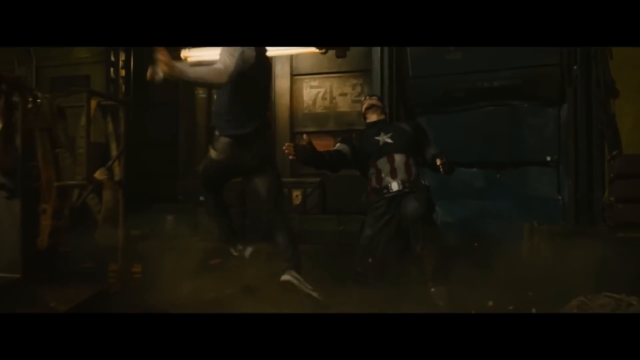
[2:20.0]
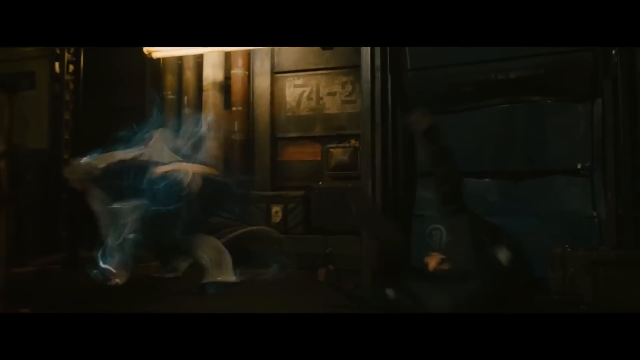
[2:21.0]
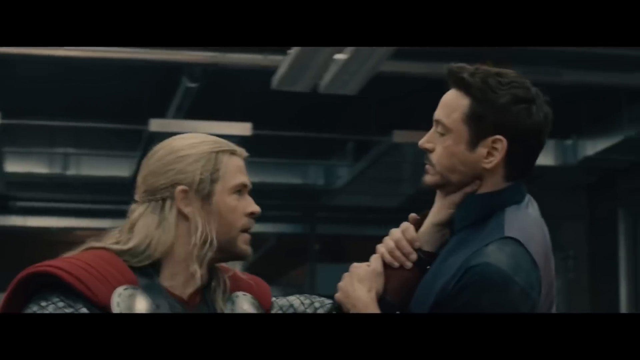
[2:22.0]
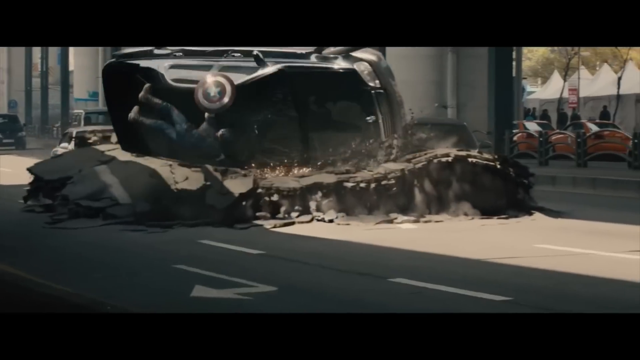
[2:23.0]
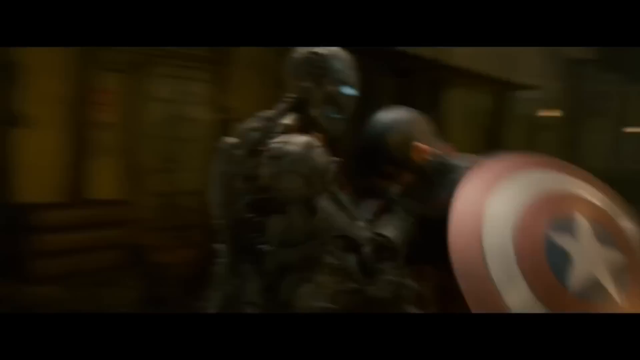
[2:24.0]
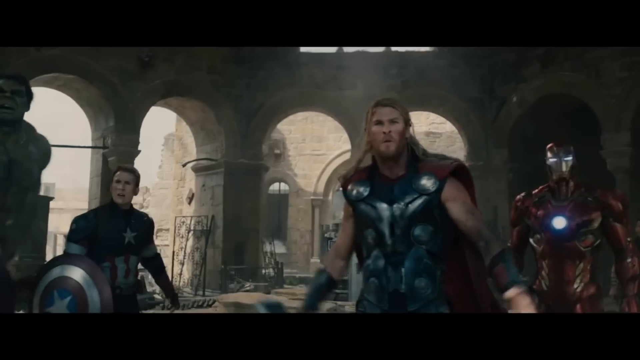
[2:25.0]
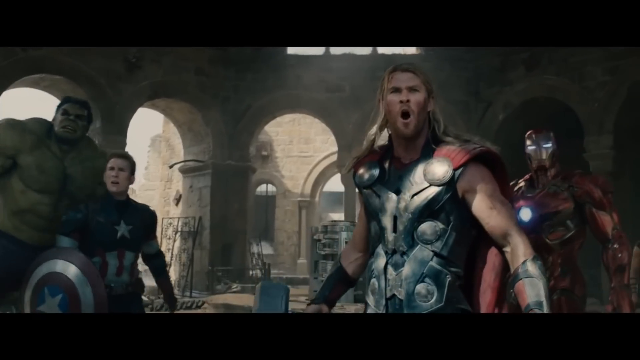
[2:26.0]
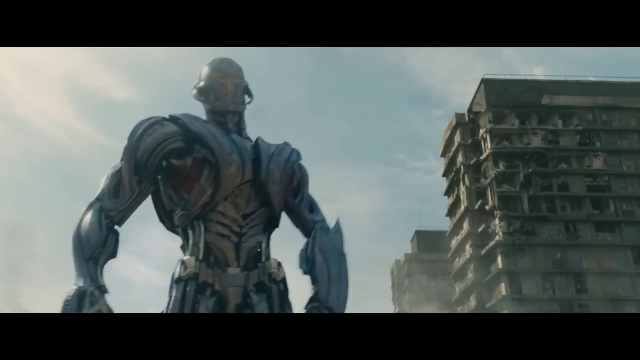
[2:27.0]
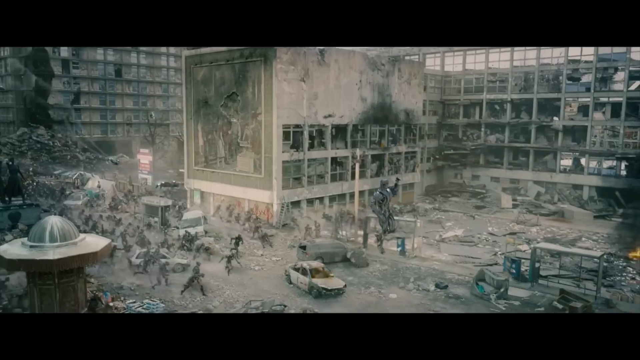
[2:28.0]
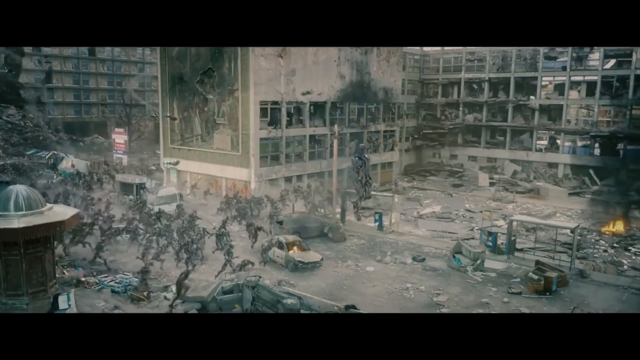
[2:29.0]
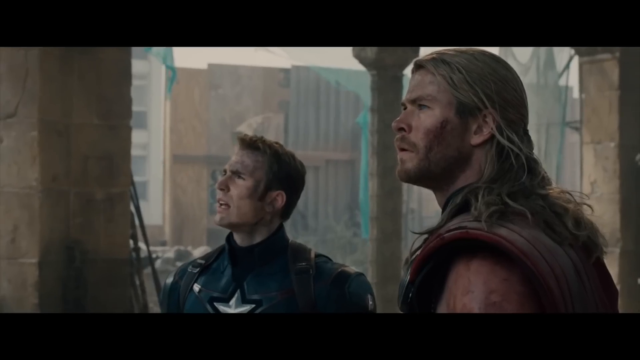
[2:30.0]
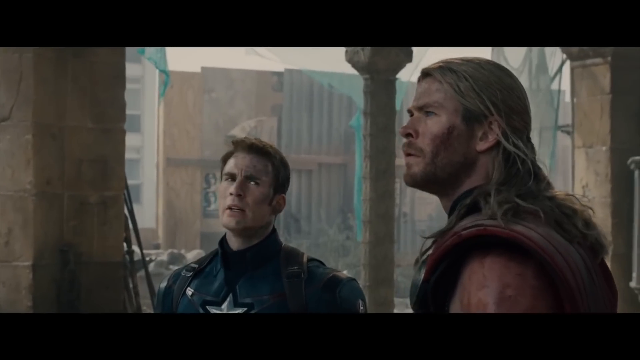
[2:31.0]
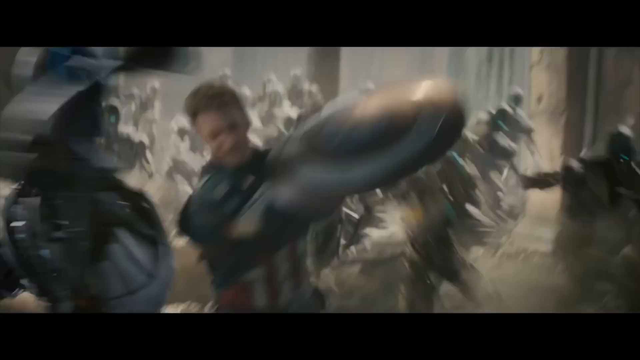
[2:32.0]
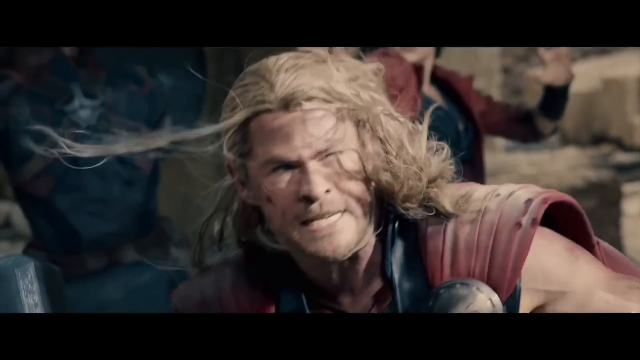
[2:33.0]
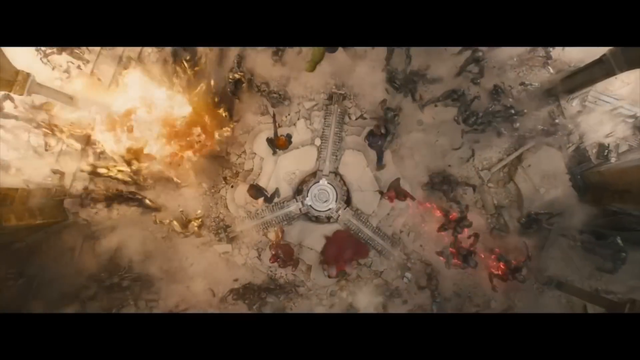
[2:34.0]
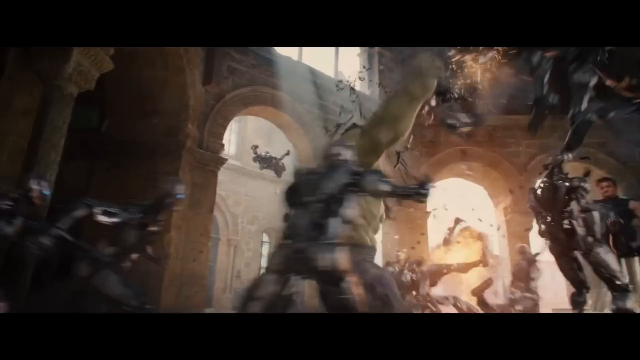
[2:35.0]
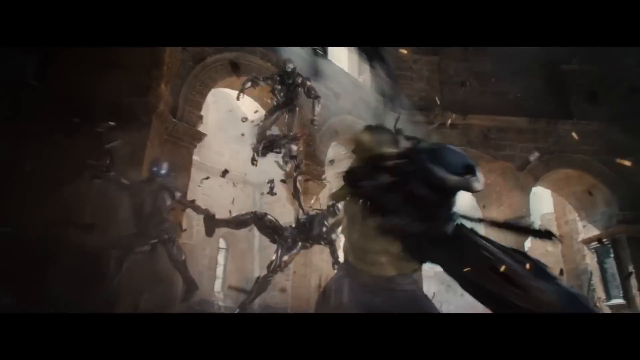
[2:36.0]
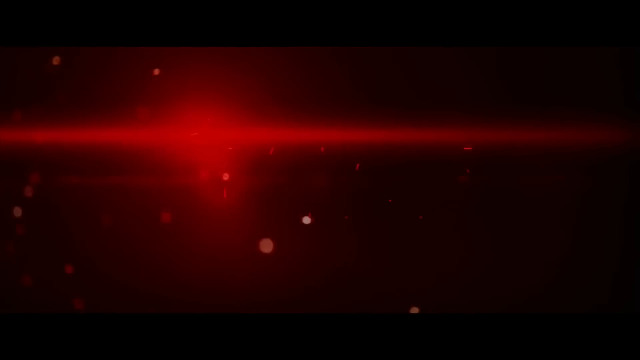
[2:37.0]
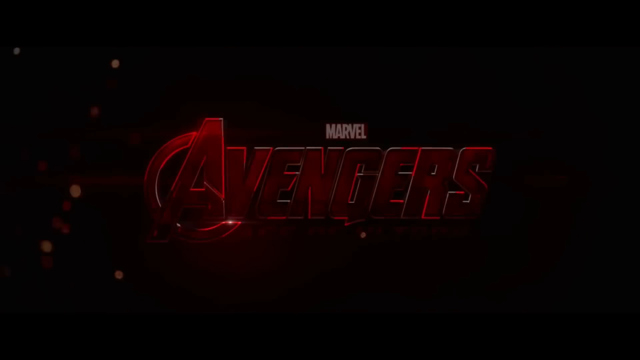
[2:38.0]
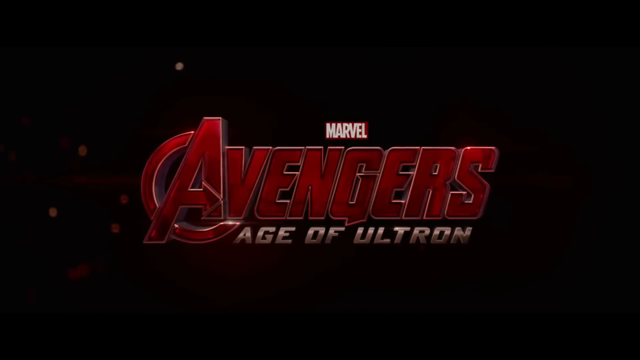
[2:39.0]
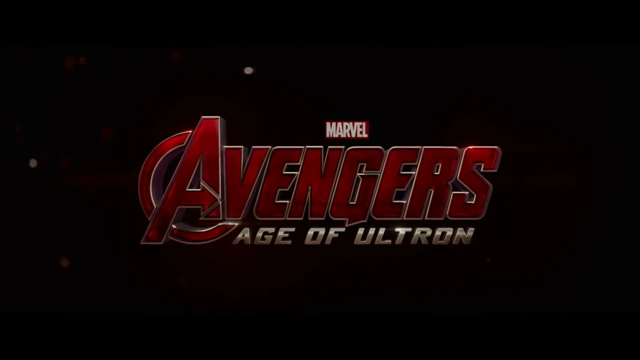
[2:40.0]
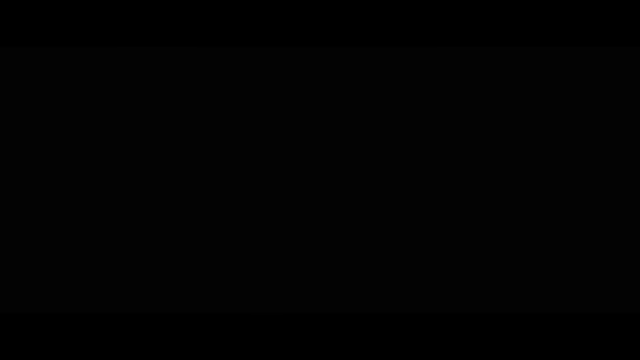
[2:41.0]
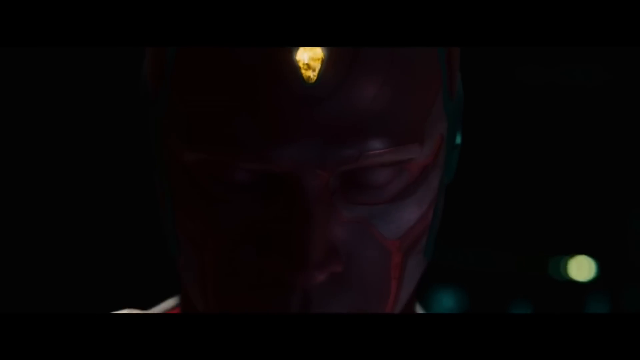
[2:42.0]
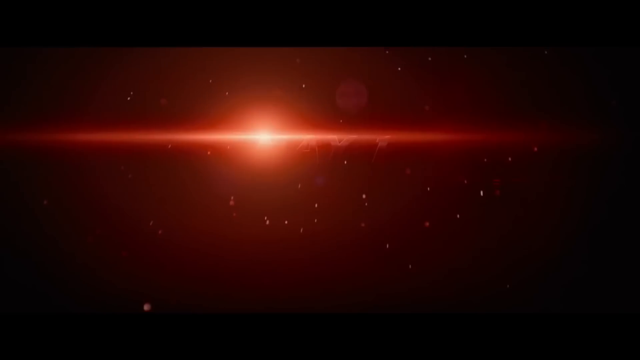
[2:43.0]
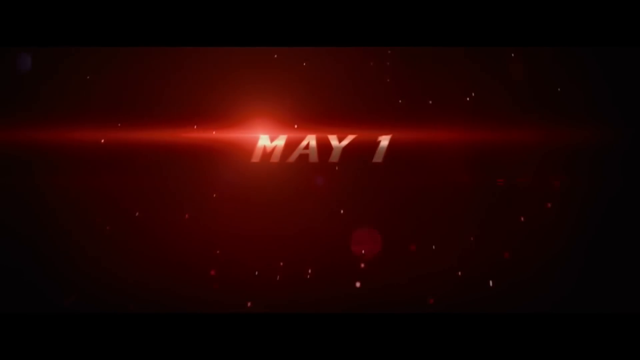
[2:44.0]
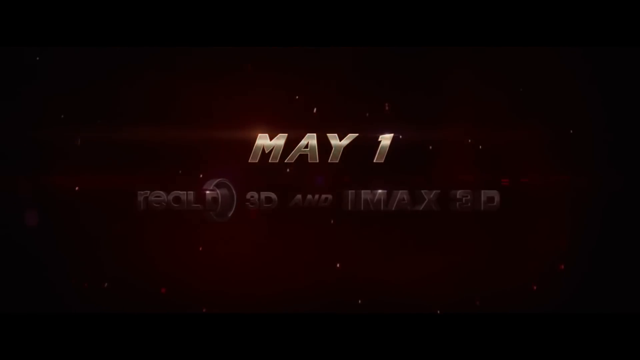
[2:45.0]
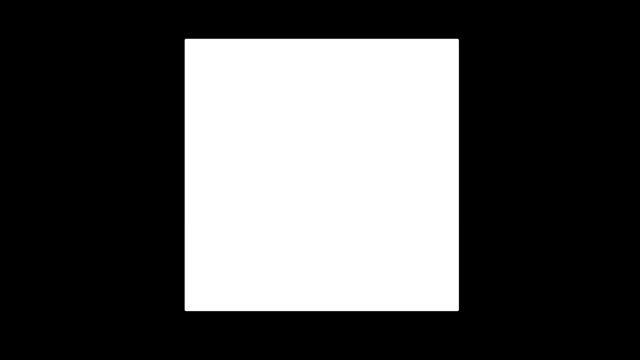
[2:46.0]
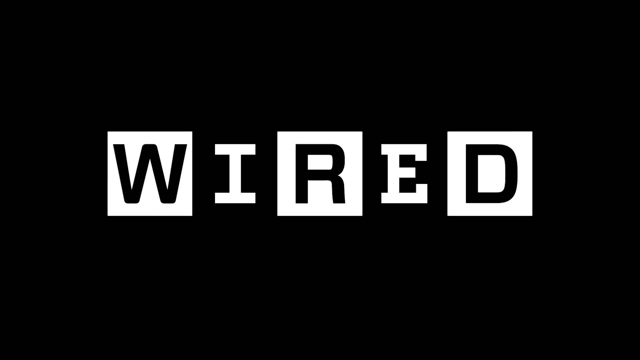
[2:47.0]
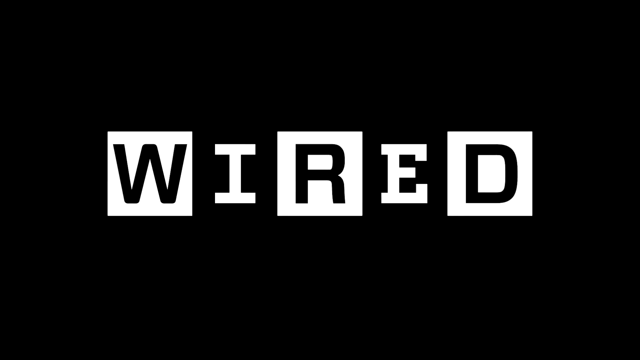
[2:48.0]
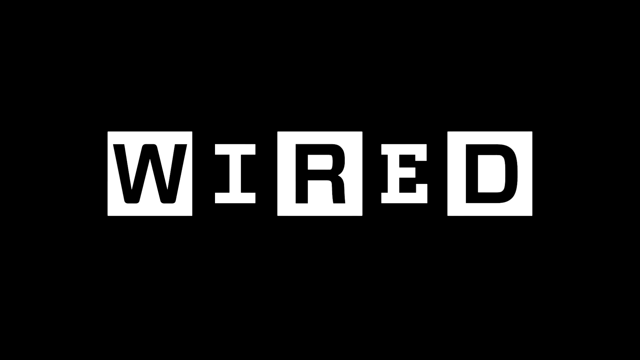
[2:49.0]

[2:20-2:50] Captain America is attacked lightning fast and hits back with his right hand before a cut to another scene. Captain America drops his shield on the street while the woman on the bike grabs it. More scenes show the cyborg, a dog in distress, and one of the Avengers injured. The cyborg appears with minions among destroyed buildings, and the Avengers try to destroy all the robots. The Avengers logo appears with the title of the upcoming movie, Age of Ultron, followed by a visual showing when the movie will come out and formats such as 3D and 2D.